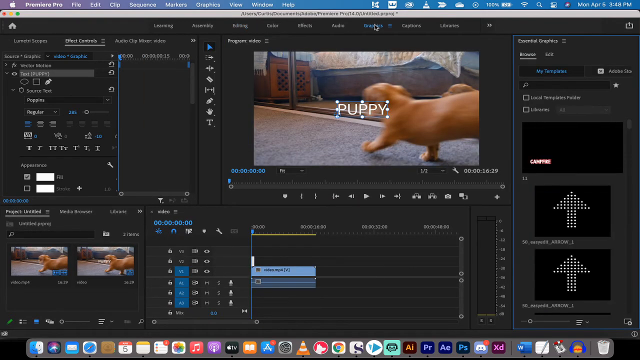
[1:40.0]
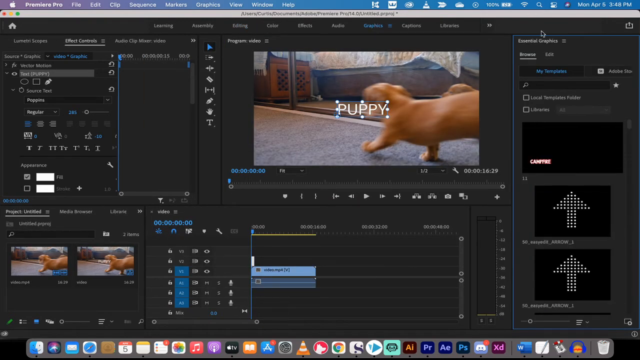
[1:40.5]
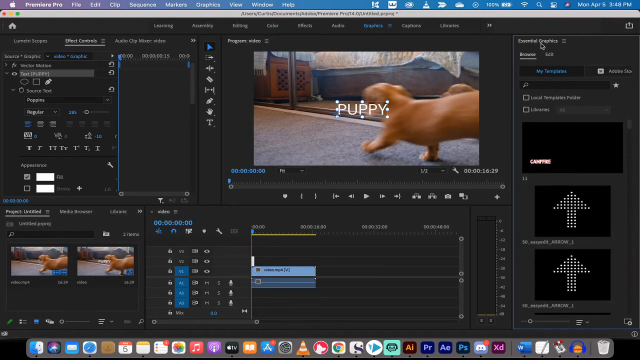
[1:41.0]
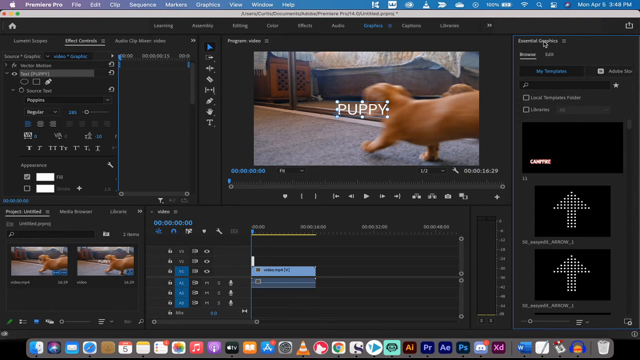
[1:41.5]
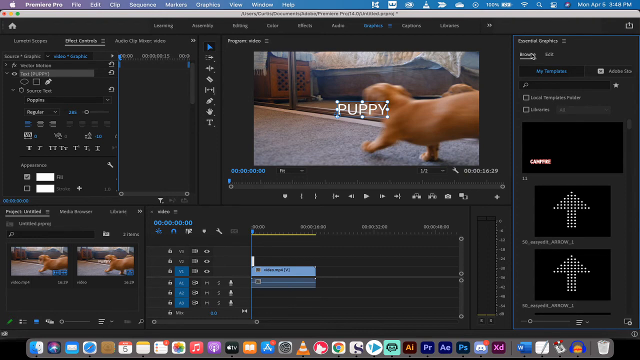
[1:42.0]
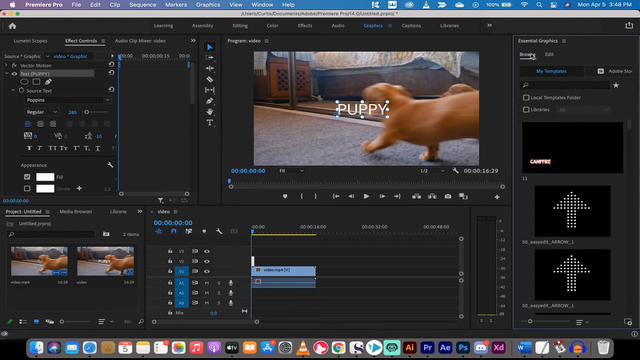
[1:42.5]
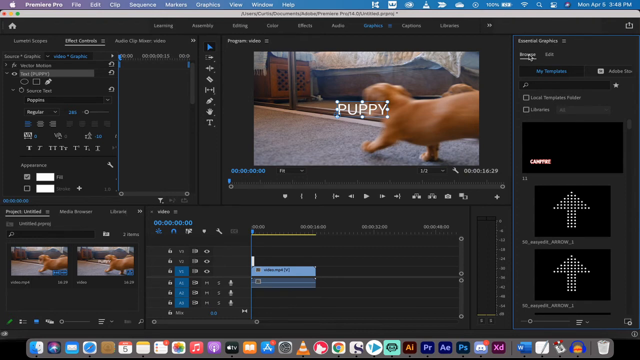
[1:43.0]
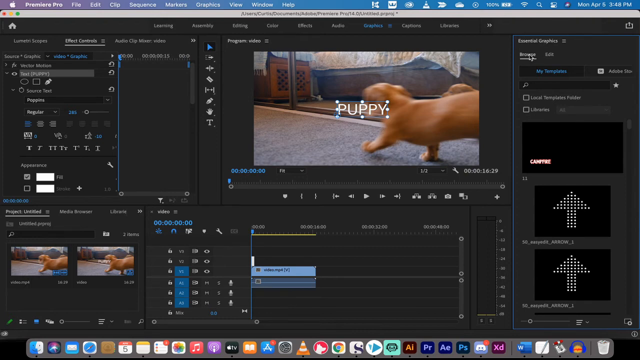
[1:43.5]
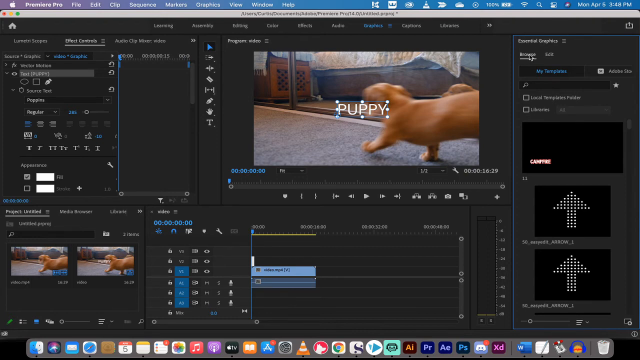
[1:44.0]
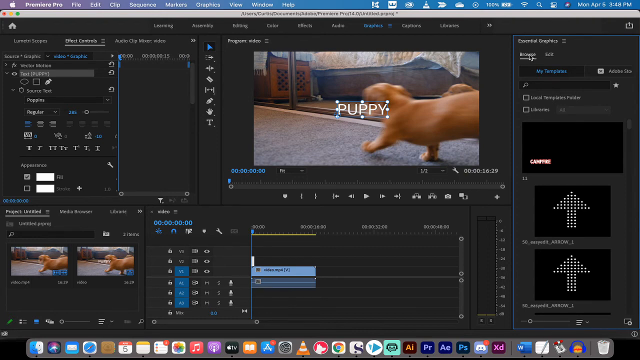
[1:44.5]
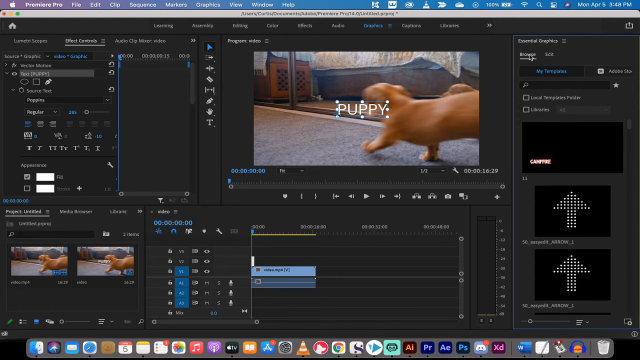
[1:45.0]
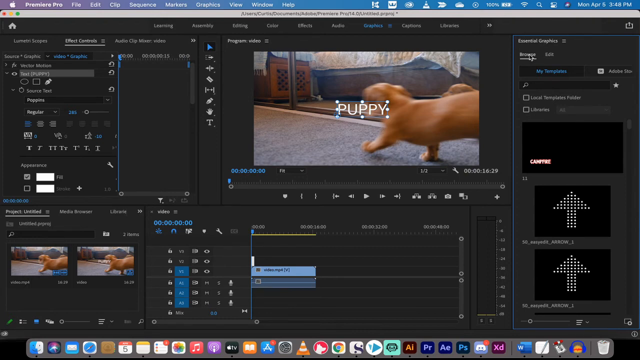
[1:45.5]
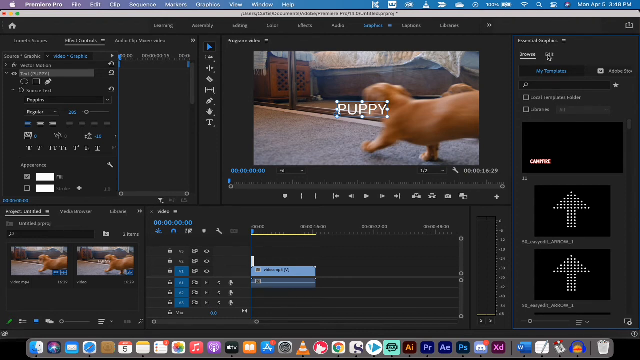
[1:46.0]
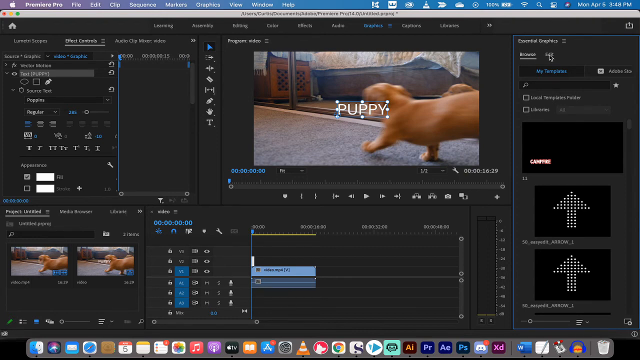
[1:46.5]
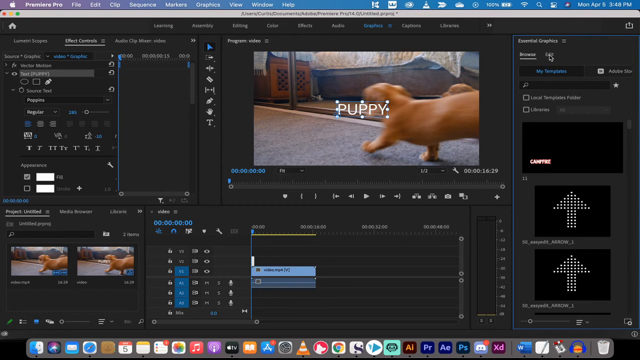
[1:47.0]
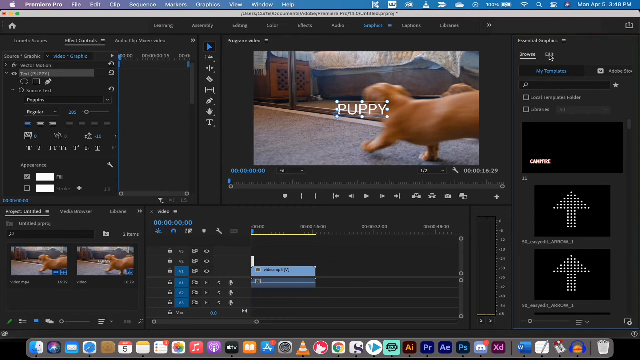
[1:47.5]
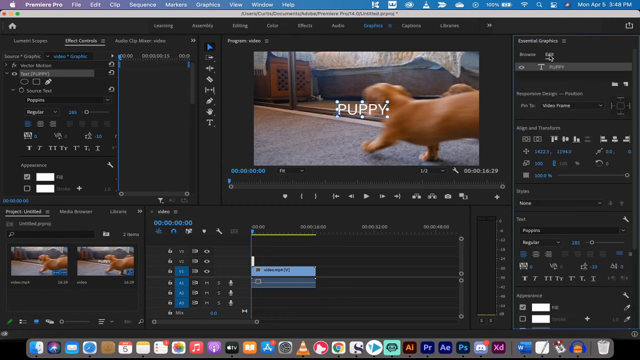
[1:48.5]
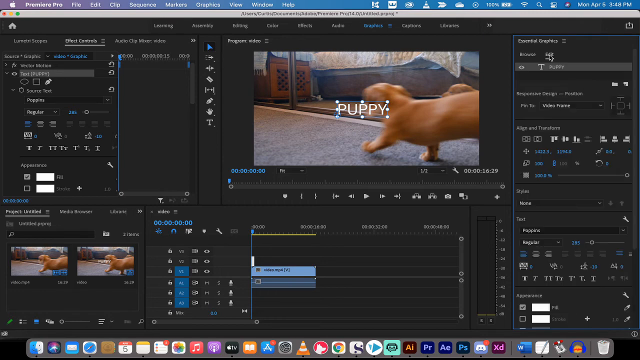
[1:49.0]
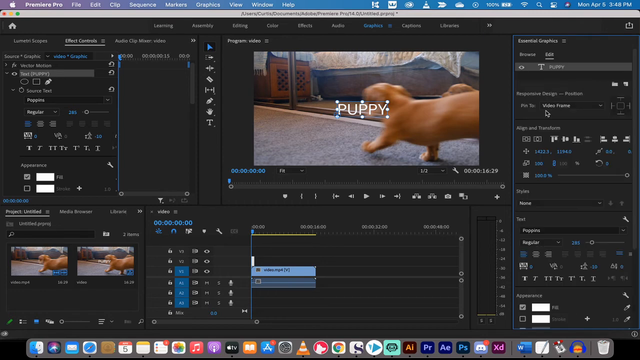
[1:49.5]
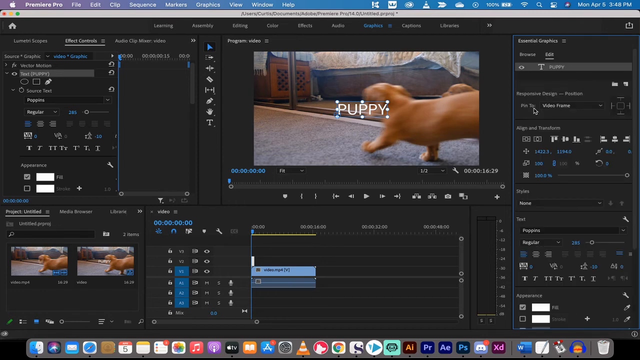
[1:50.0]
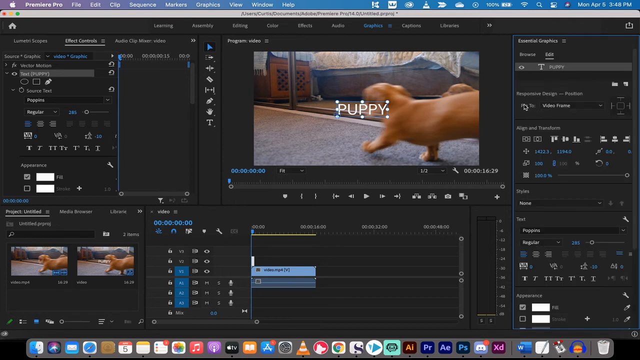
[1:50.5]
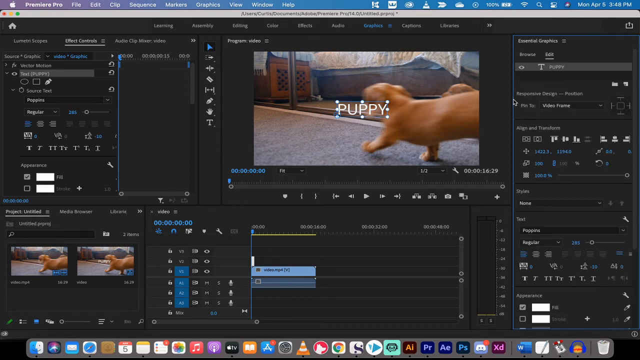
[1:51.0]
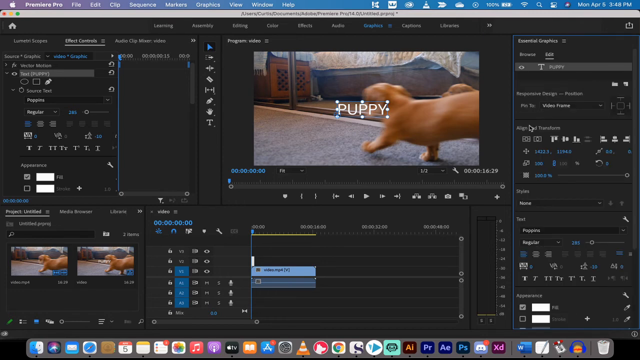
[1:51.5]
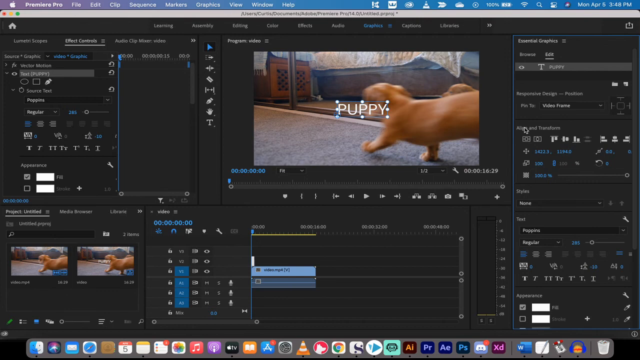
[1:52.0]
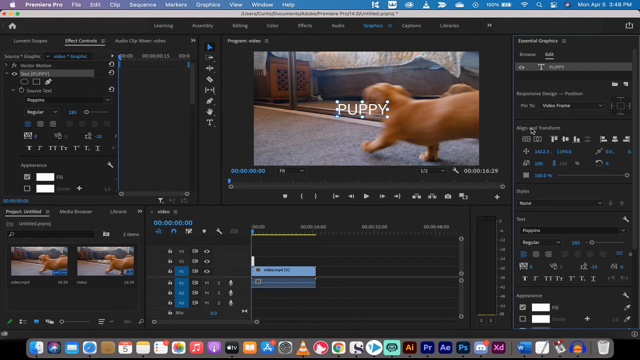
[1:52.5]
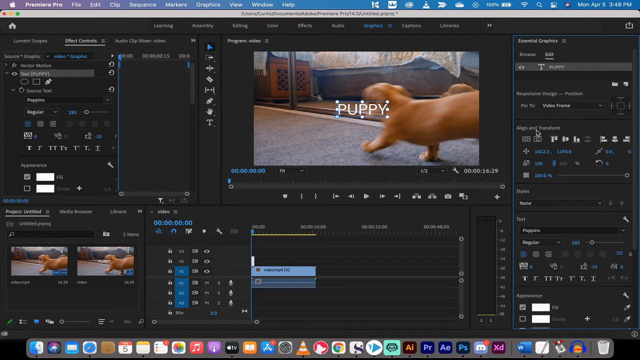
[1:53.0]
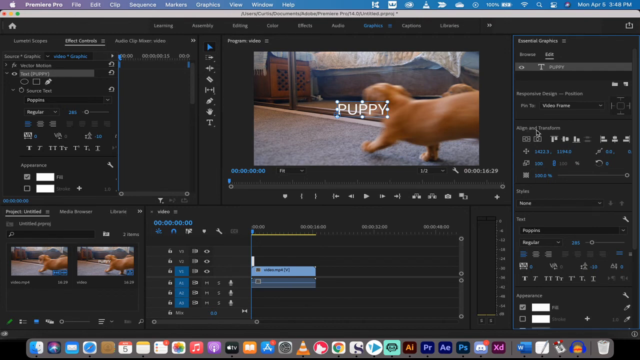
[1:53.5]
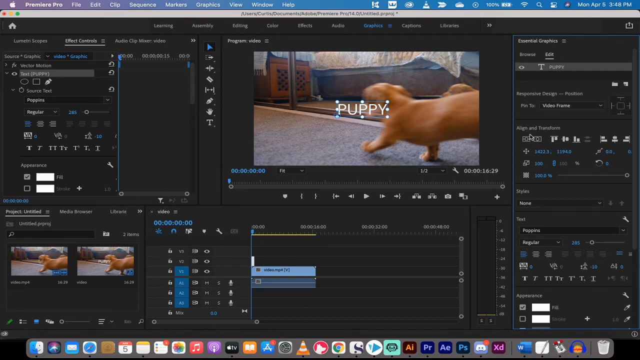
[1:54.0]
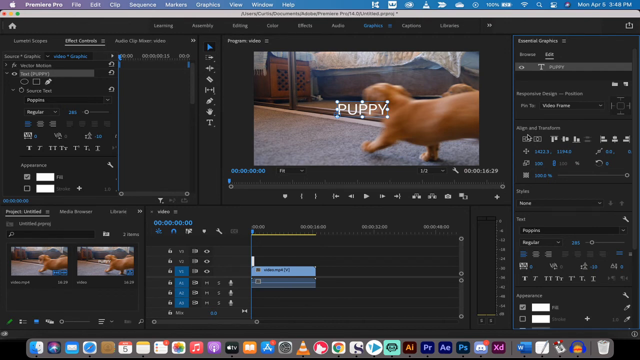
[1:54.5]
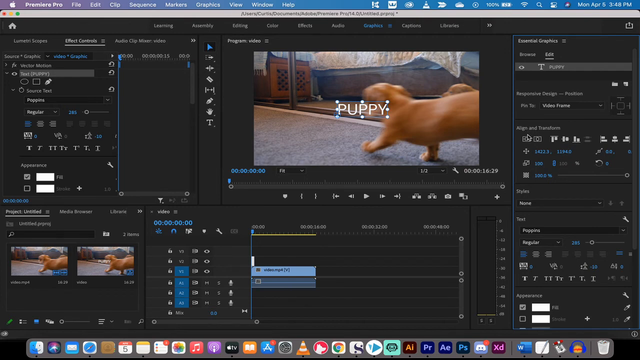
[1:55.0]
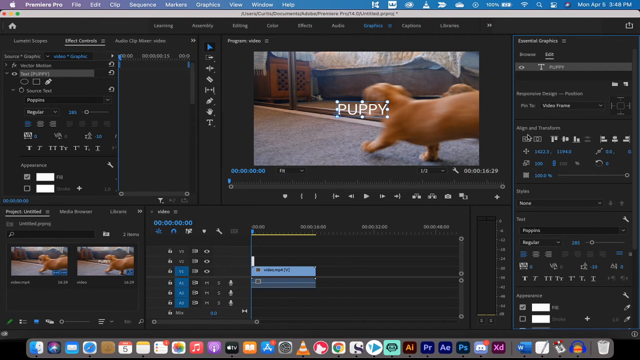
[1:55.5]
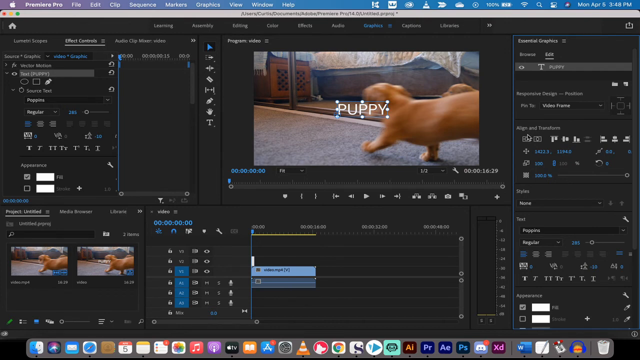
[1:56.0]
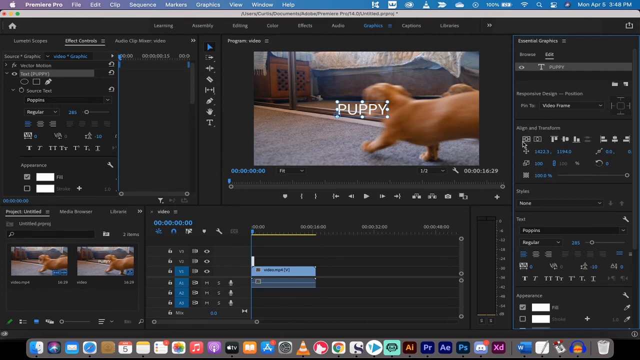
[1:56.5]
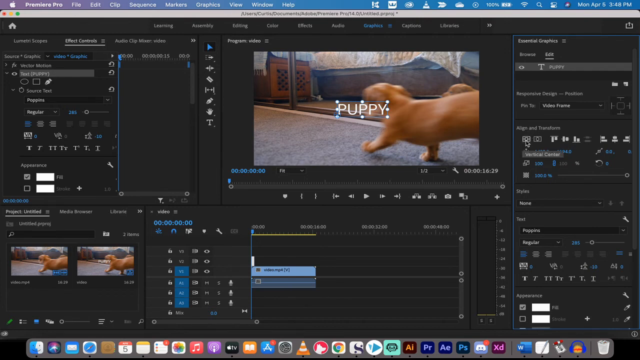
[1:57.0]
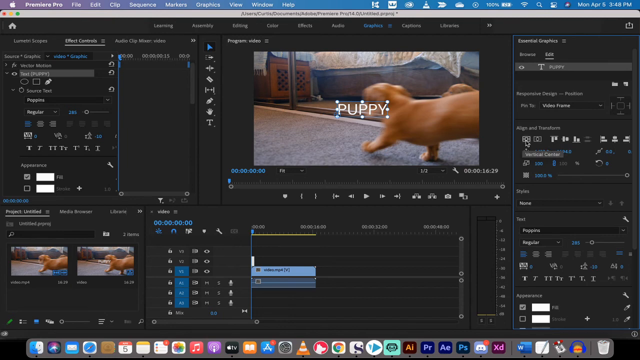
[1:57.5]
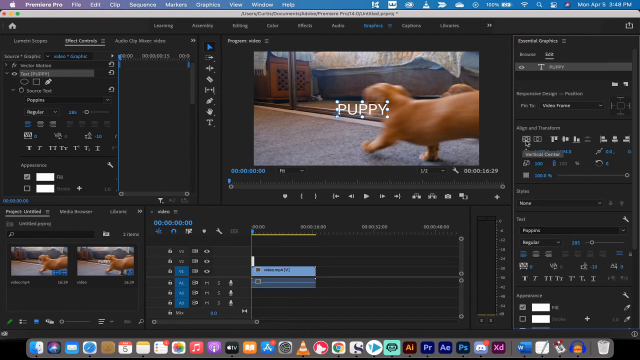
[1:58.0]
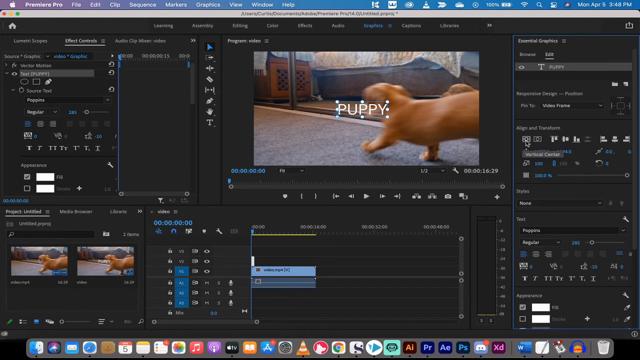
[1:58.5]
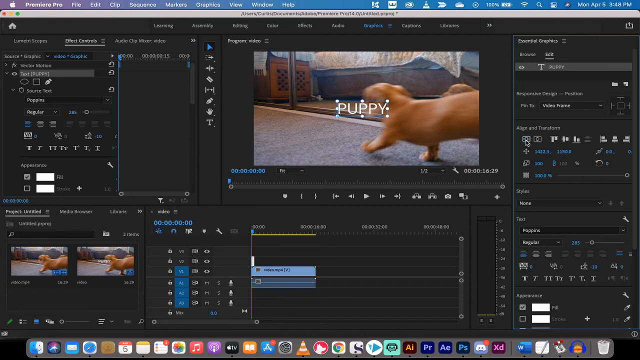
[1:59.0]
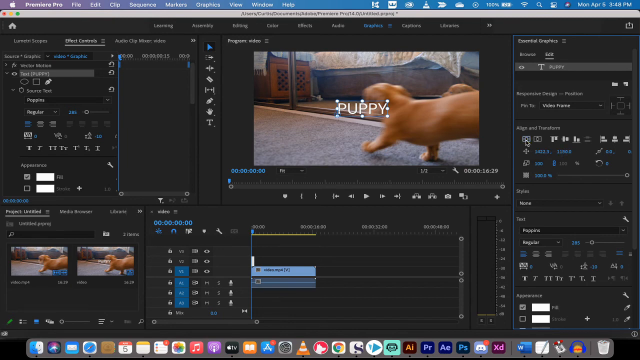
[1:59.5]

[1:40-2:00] The program video preview section has moved toward the left as a new vertical window has been added on the right side of the program, titled "external graphics". Inside are options to browse and edit with my templates, and three different preview options are visible. The cursor starts at the very top of the program, moves over to the external graphics section, hovers over the title area, and moves down to the Browse tab, where it hovers for several seconds. It then moves slightly right to the Edit tab next to the Browse tab, selects it, moves down, scans around inside the Edit section, and hovers over align and transforms.